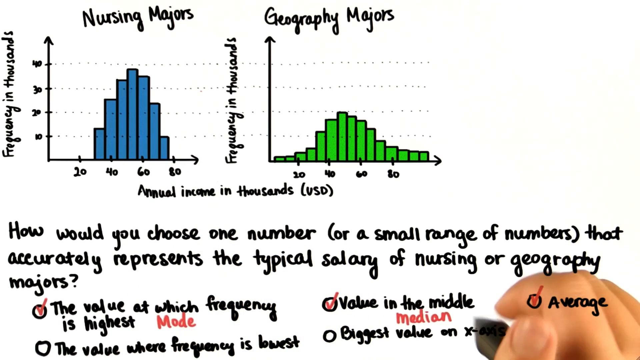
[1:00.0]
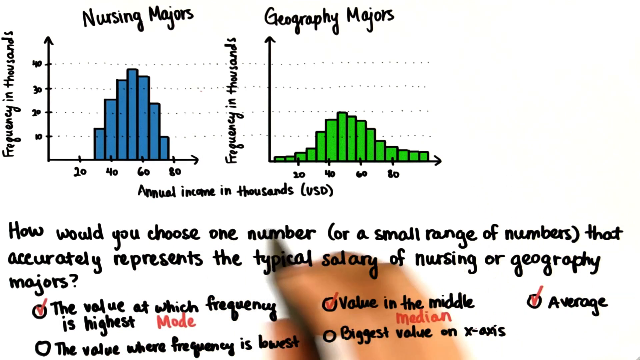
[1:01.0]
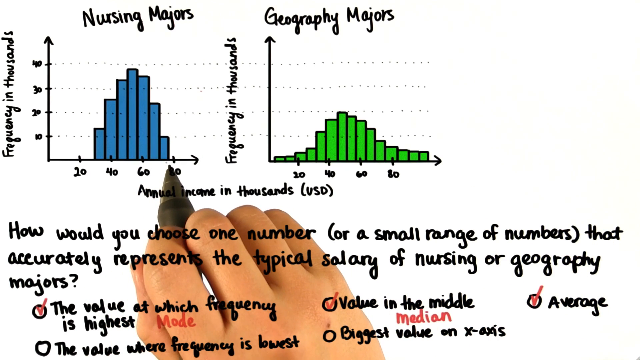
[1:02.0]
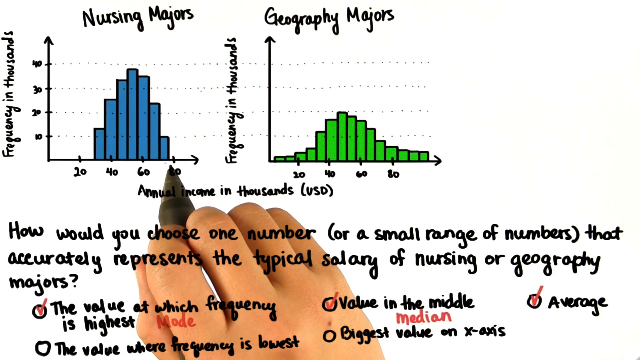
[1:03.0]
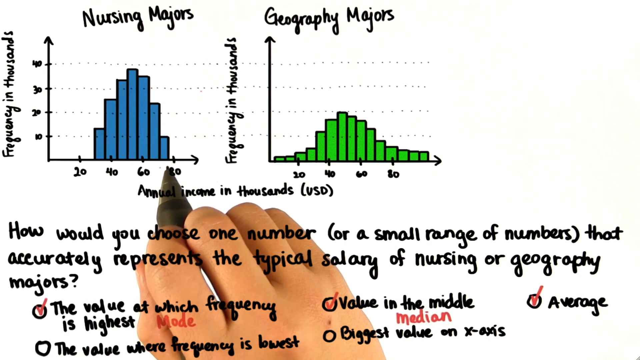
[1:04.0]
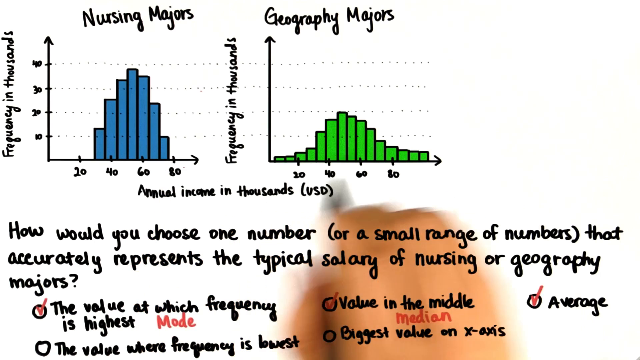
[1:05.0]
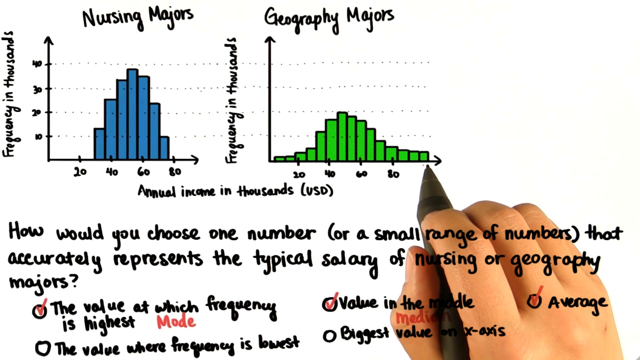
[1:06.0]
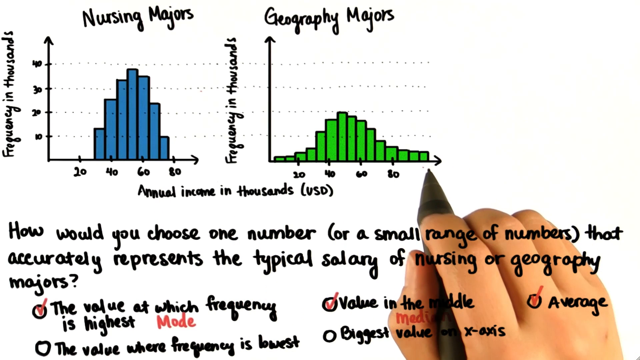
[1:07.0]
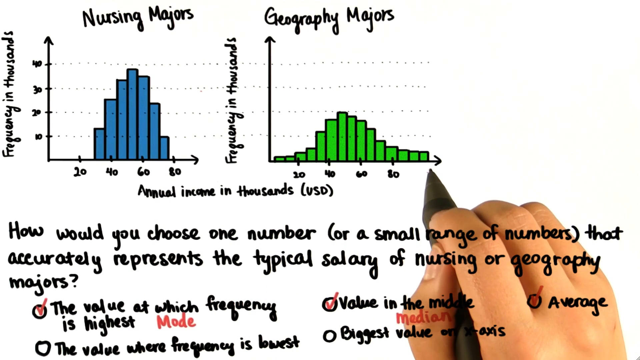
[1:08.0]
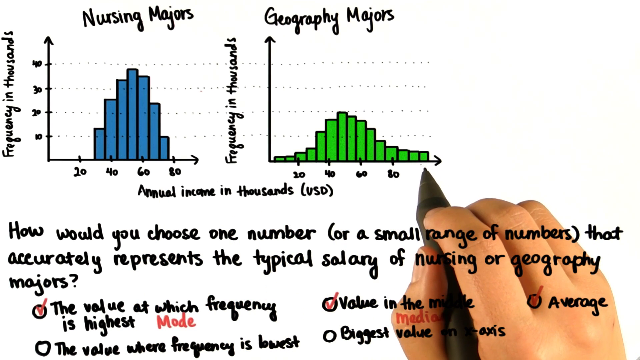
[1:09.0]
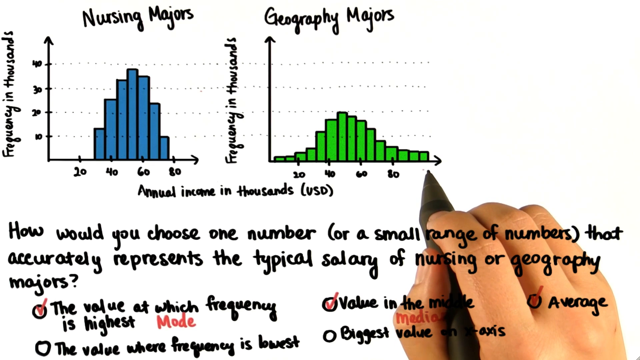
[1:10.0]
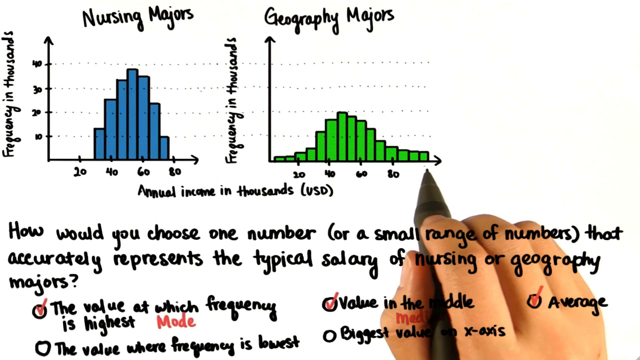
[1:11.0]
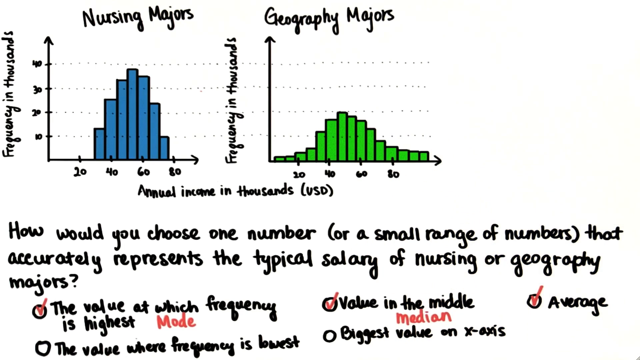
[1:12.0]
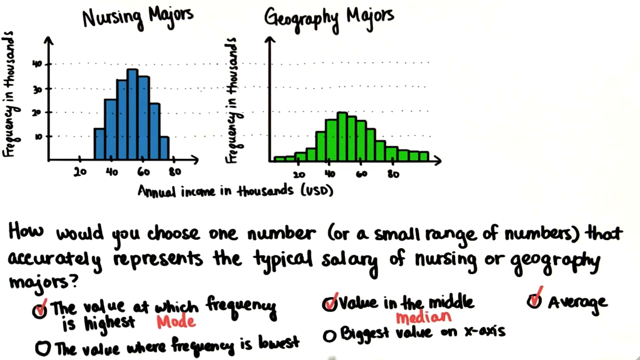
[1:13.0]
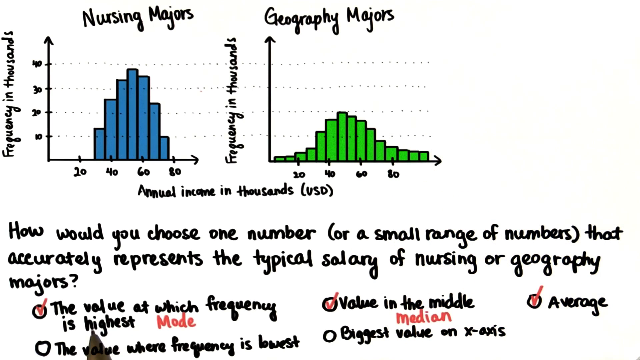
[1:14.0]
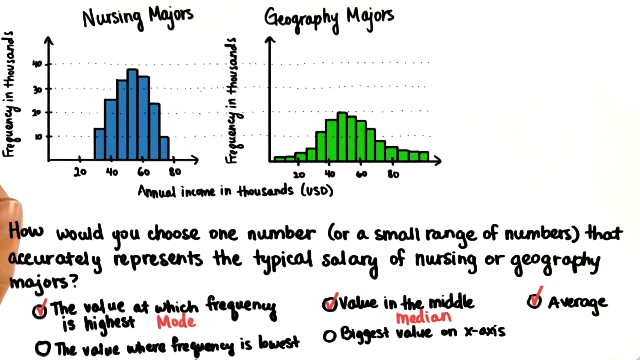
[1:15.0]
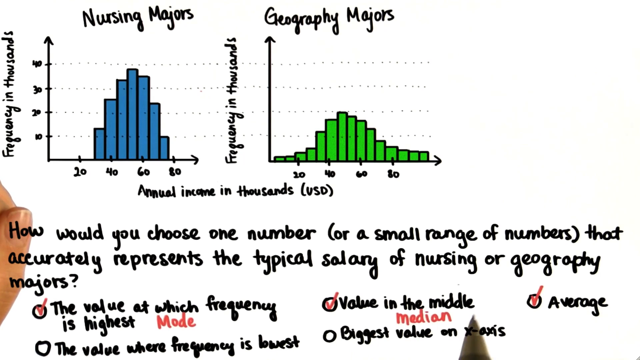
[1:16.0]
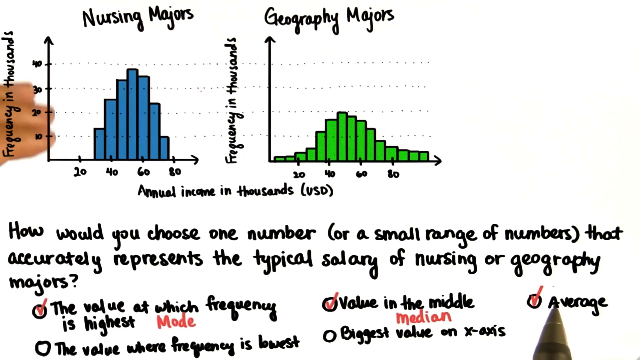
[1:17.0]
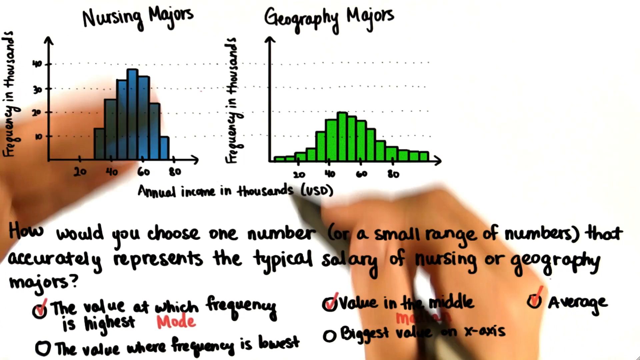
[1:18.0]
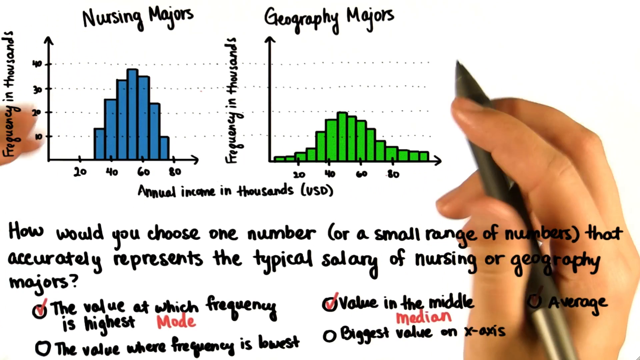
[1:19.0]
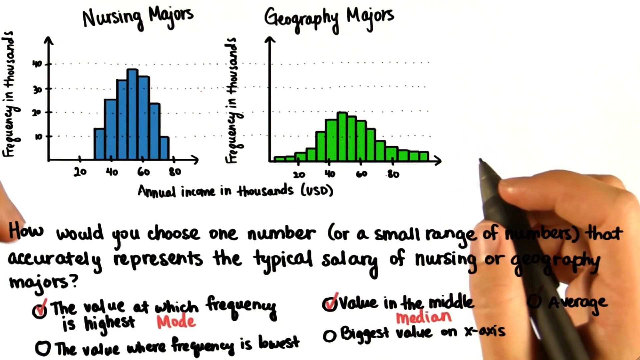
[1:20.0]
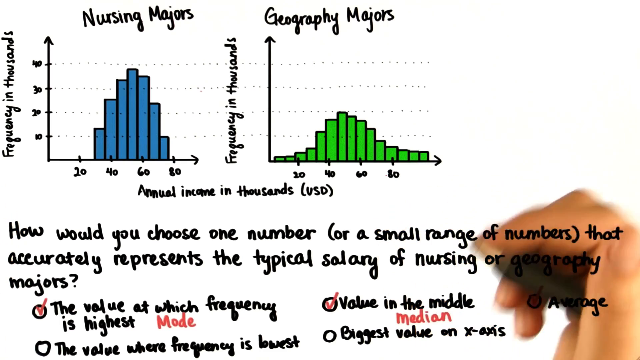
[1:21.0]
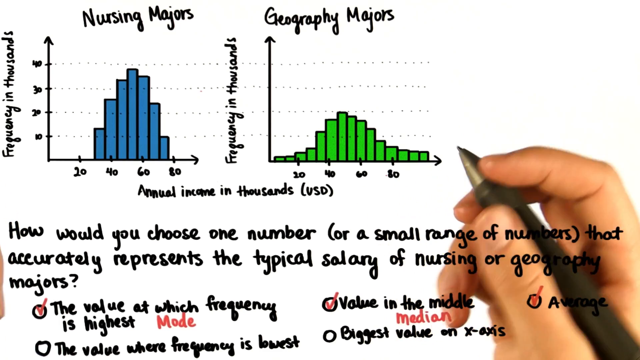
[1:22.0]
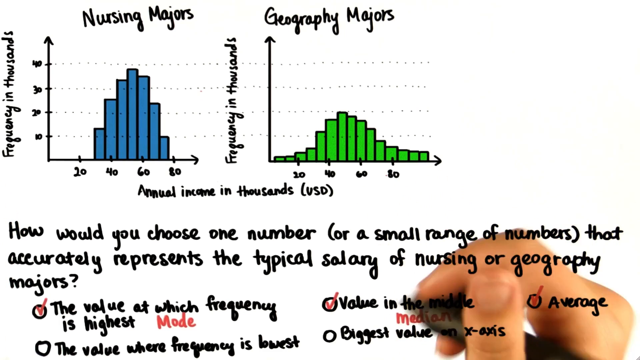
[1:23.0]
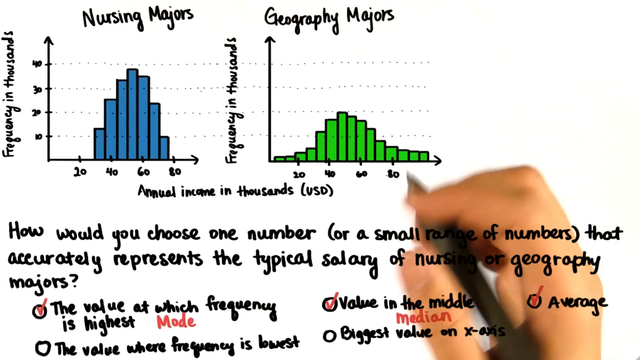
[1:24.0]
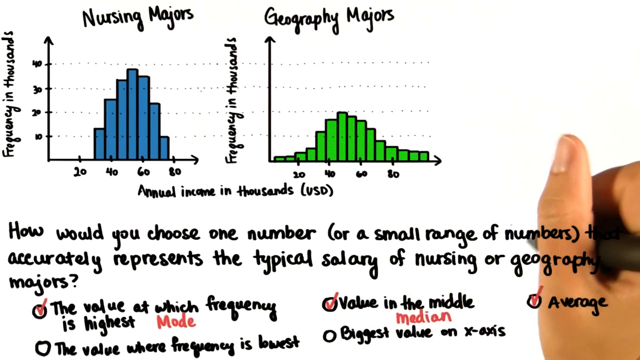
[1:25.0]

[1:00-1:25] The graphs show nursing majors and geography majors against a white background. The sides of the graphs read "frequency in thousands", and the bottom reads "annual income in thousands". The geography majors graph is in green. At the bottom is a question about choosing one number or a small range of numbers that represents the typical salary of nursing or geography majors, with answers below it: the first is "the value at which frequency is highest", the second is about the value in the middle, followed by a last one. A person's hand, probably that of the one explaining the diagrams, uses a black pen that writes in red, ticking the bottom part to show the correct answer.